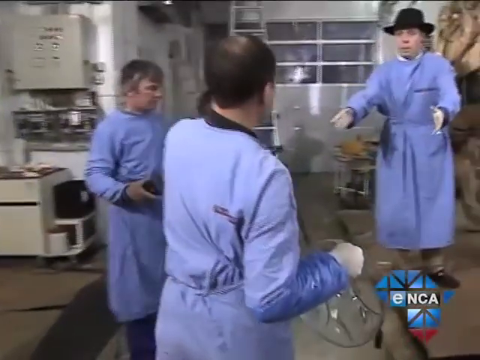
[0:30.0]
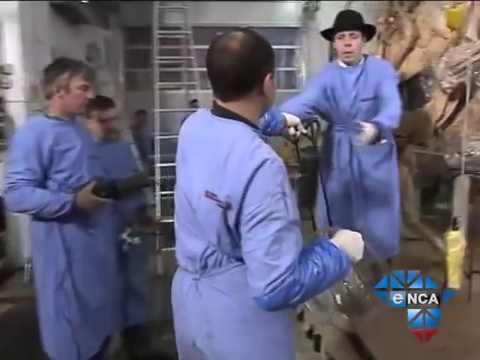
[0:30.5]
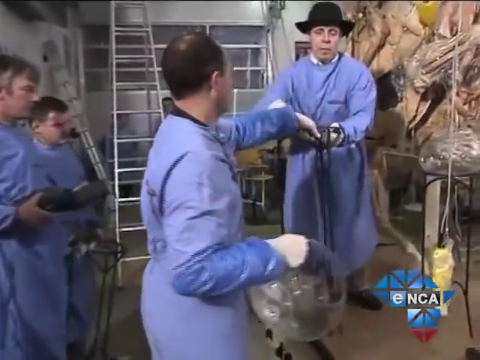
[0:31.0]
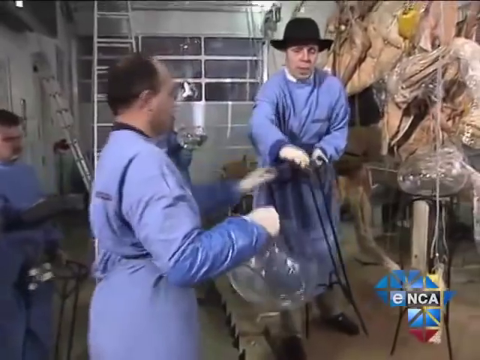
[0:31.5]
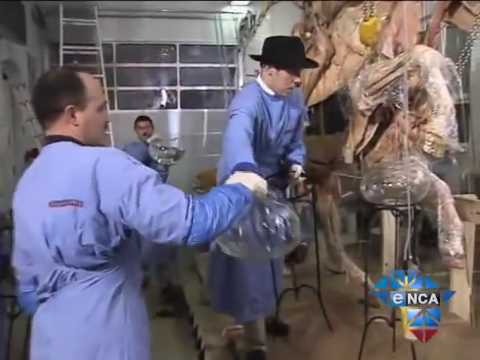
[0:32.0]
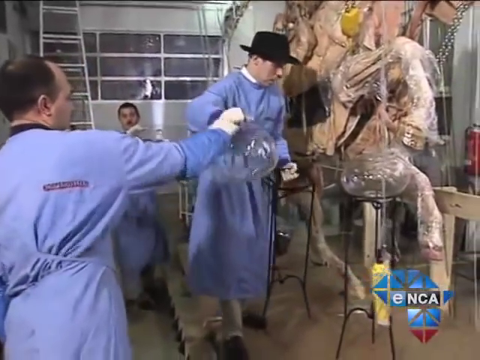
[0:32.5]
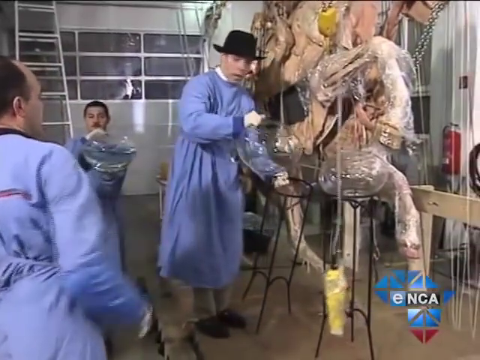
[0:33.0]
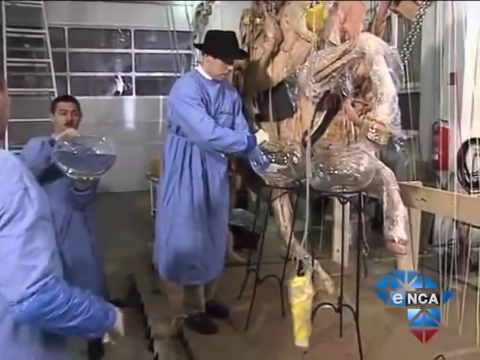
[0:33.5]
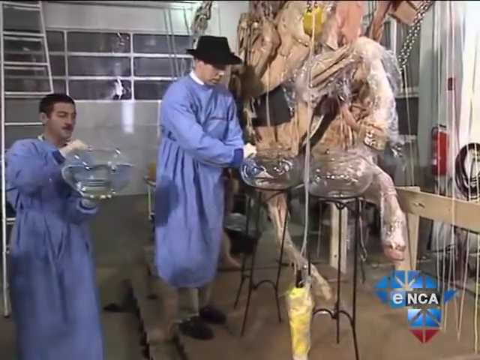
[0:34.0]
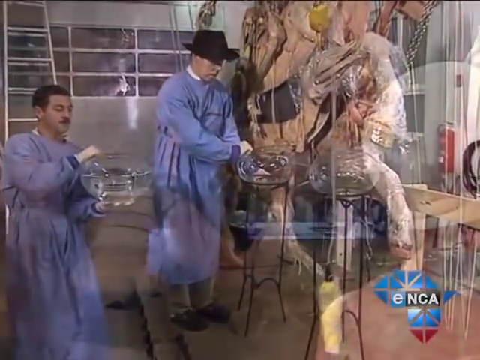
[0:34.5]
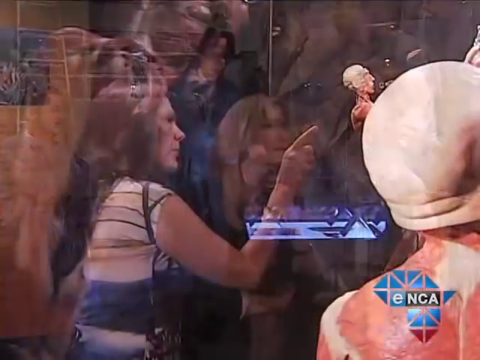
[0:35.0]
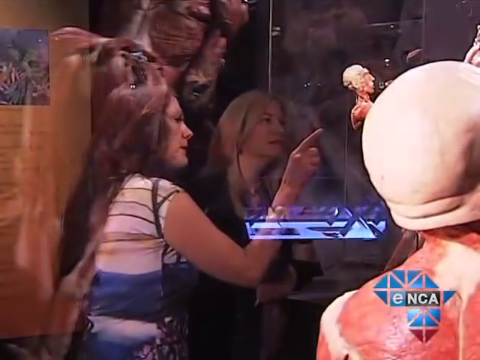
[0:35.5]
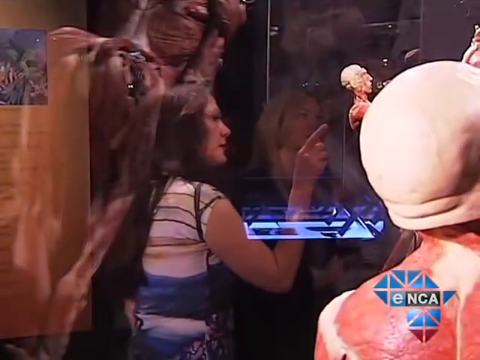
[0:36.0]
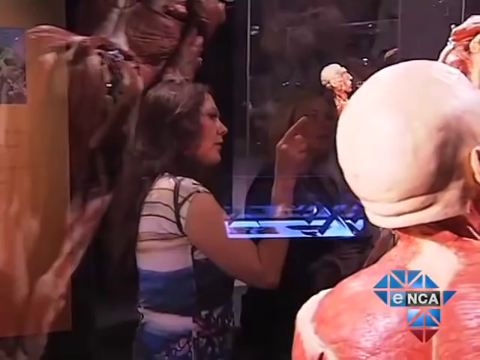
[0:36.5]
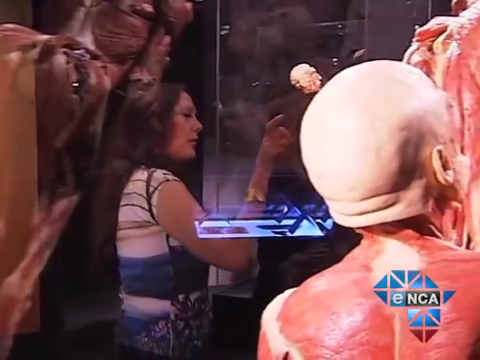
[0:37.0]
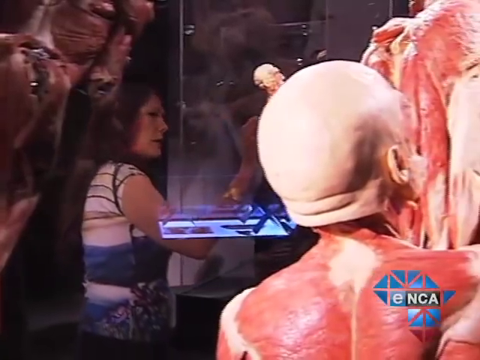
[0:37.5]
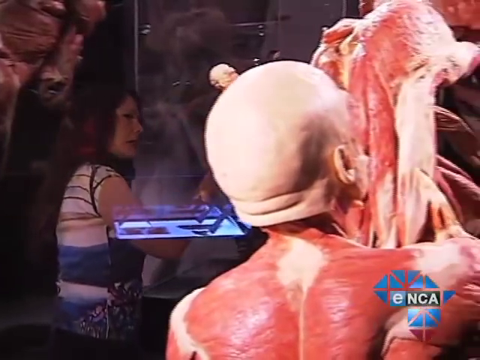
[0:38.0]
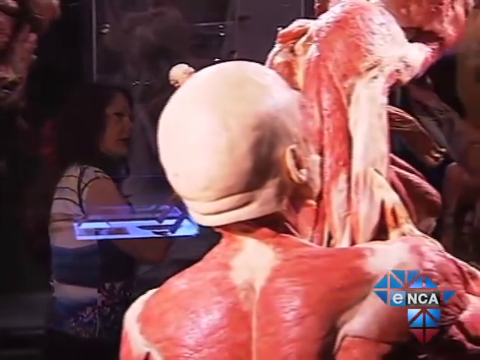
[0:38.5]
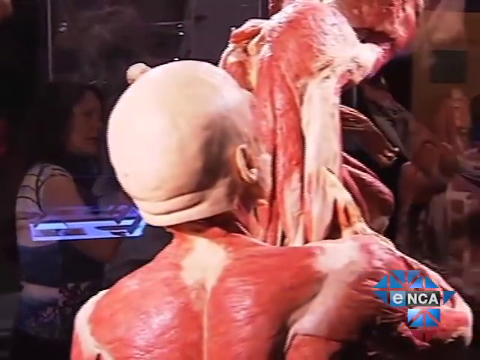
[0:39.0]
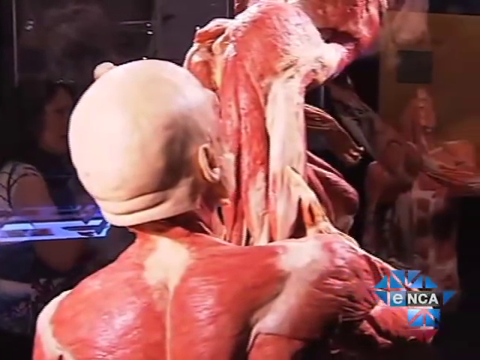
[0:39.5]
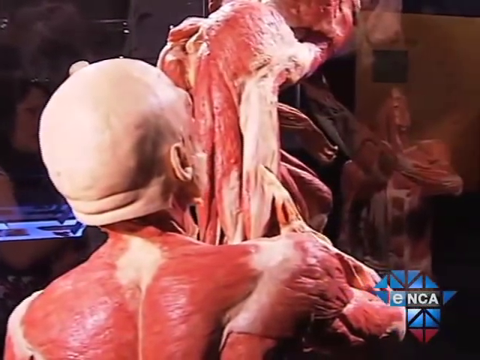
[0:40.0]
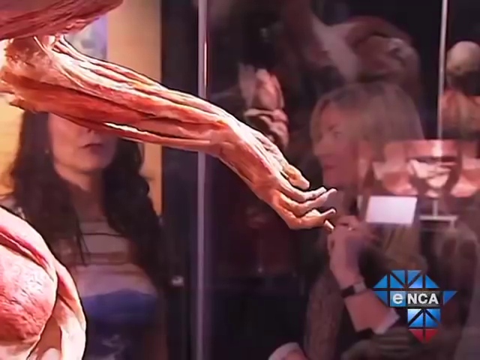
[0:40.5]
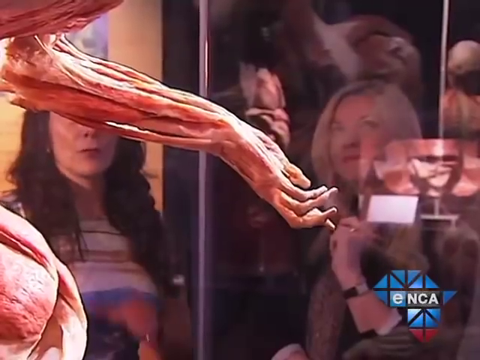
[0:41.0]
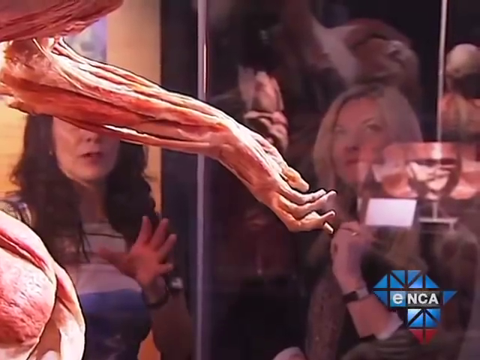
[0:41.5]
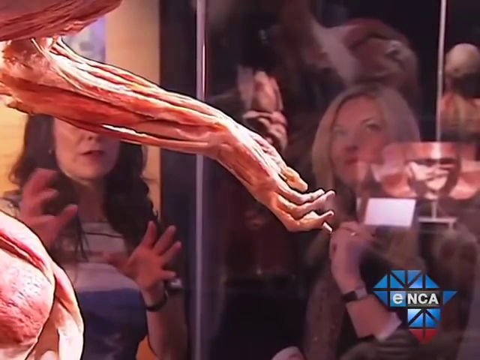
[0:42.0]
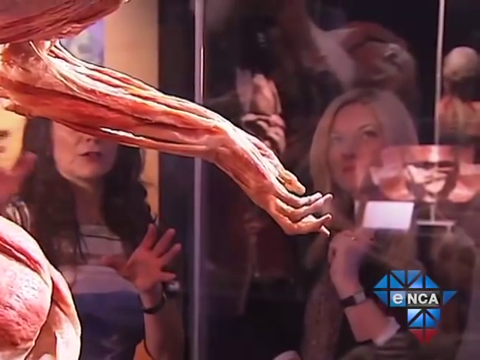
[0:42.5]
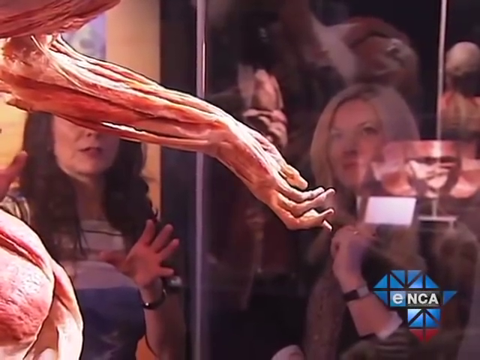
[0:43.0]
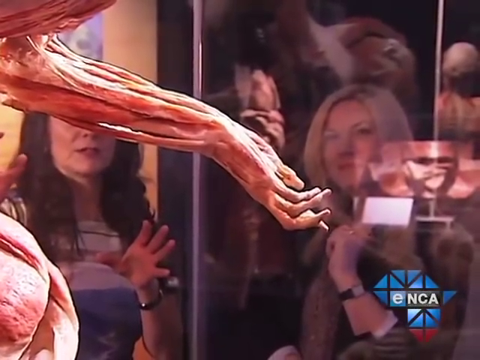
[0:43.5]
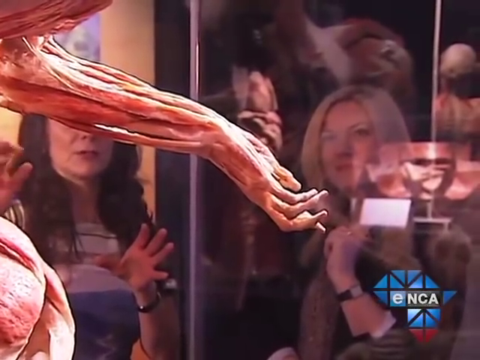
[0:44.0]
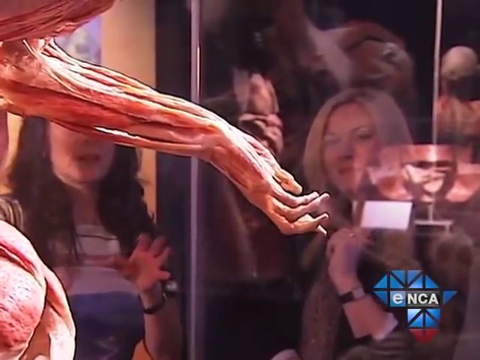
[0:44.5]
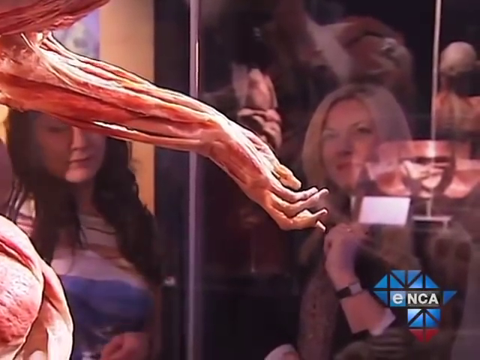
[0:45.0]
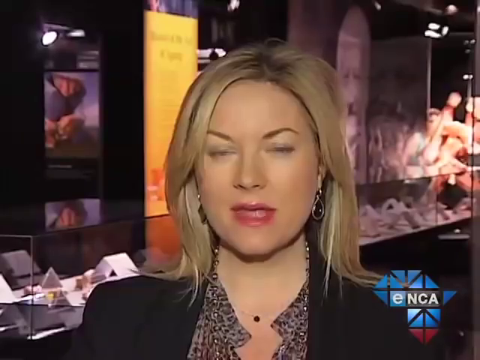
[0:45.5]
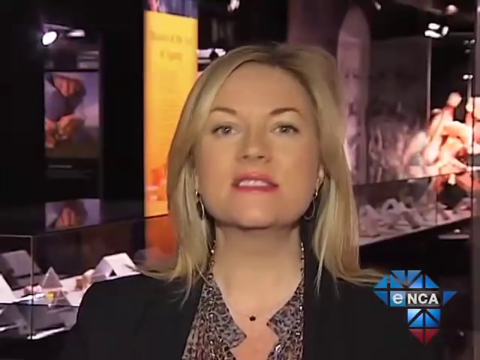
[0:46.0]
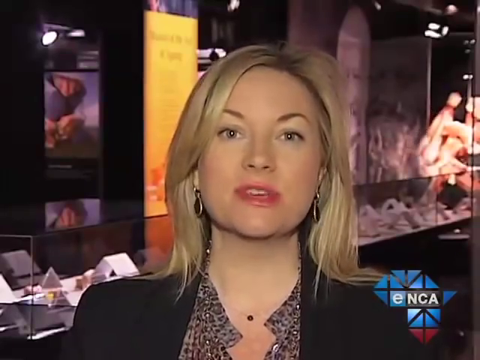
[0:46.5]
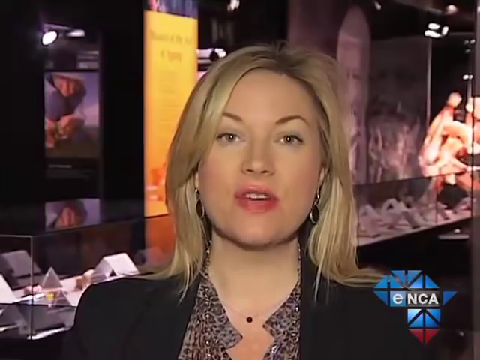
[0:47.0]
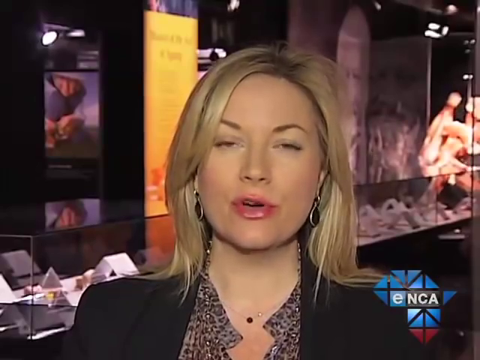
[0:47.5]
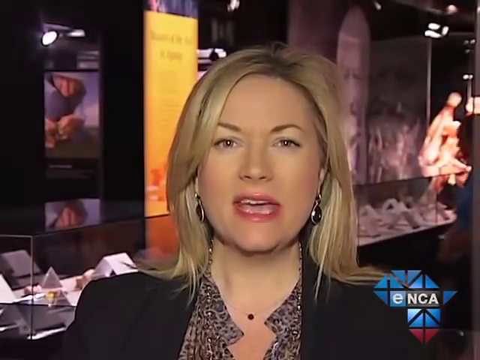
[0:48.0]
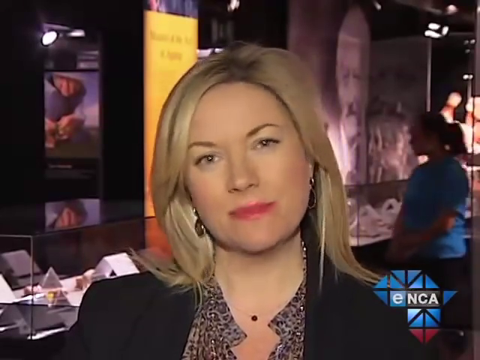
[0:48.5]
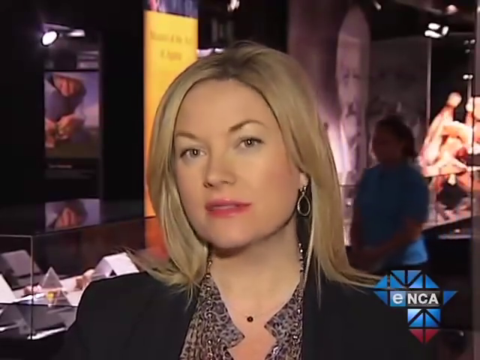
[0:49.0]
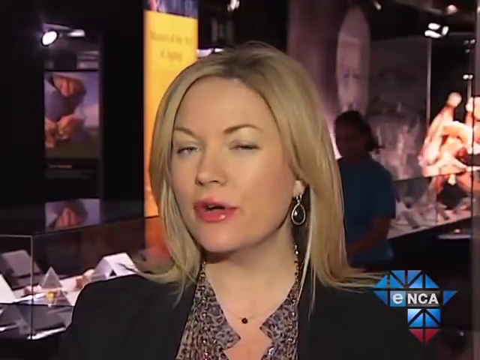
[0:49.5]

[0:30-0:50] Some men put together scientific displays of the human body while other people watch. A reporter is reporting for the ENCA channel or program. The men building the displays wear blue gowns or something like doctor's coats, and one wears a black top hat. People look intently at the inner workings of the human body in what seems to be a display like one at a scientific center open to the public, and some take pictures. The video then cuts to the reporter talking at the science center.